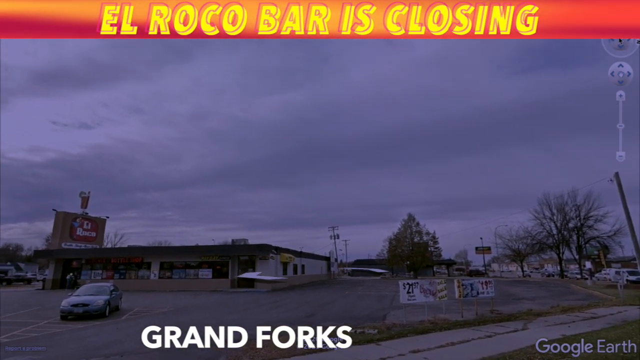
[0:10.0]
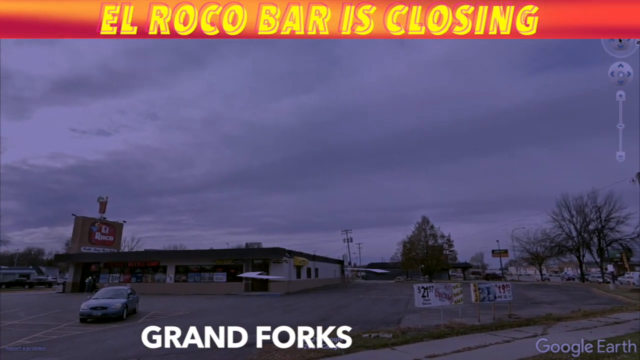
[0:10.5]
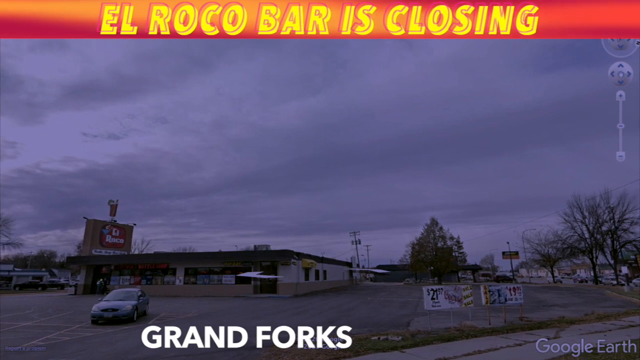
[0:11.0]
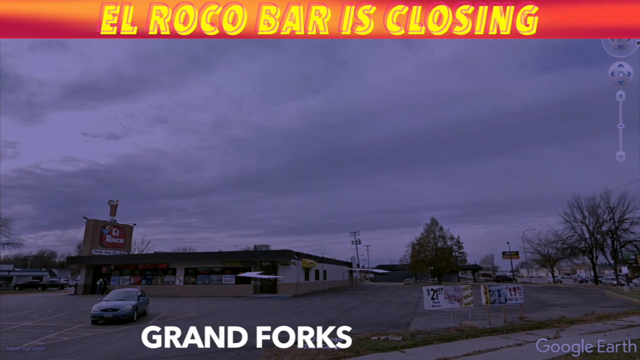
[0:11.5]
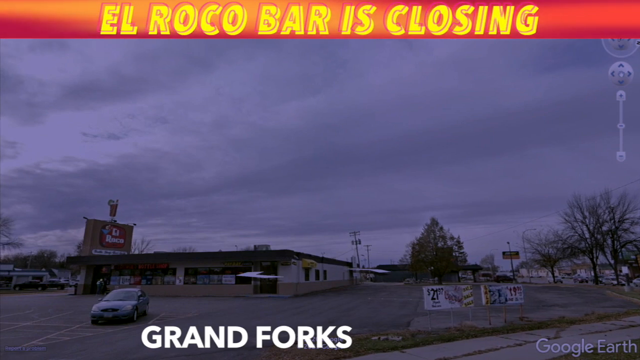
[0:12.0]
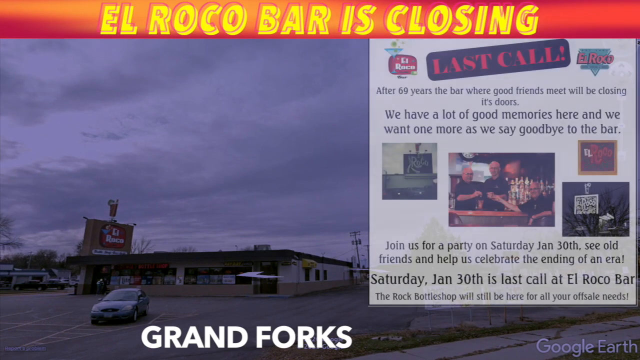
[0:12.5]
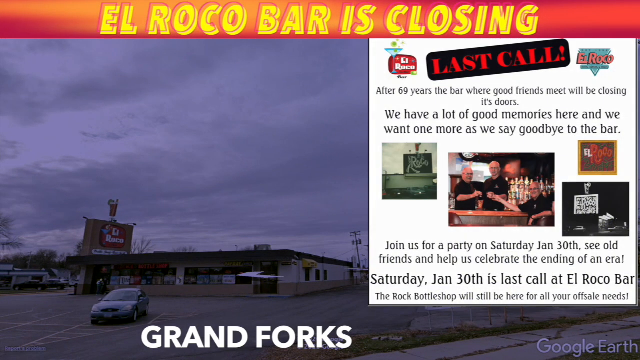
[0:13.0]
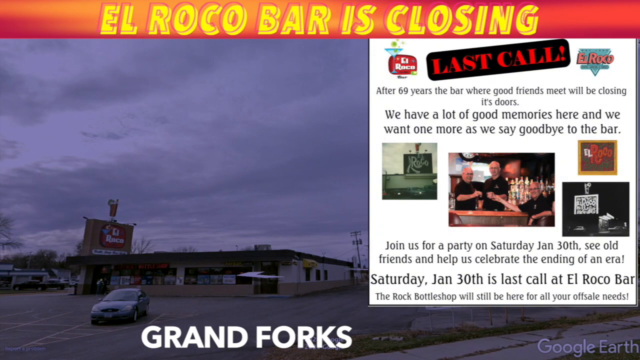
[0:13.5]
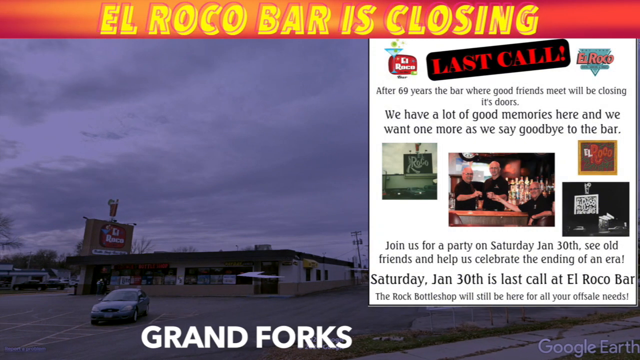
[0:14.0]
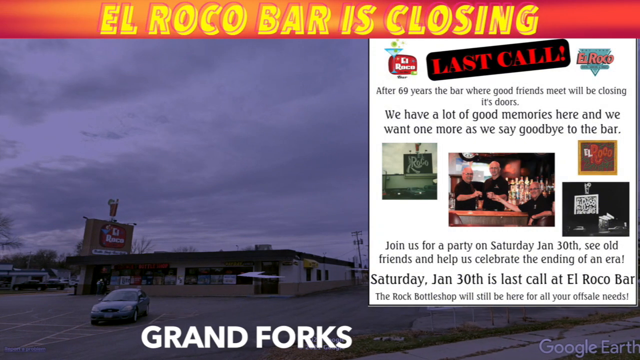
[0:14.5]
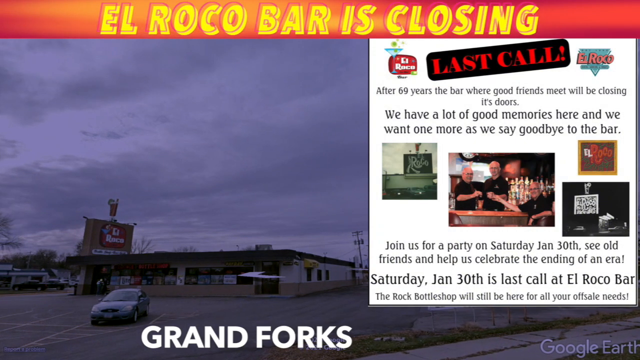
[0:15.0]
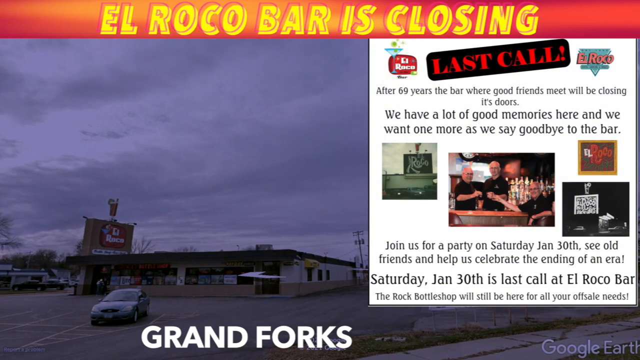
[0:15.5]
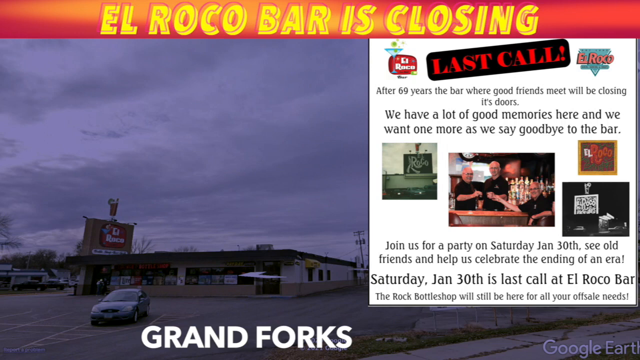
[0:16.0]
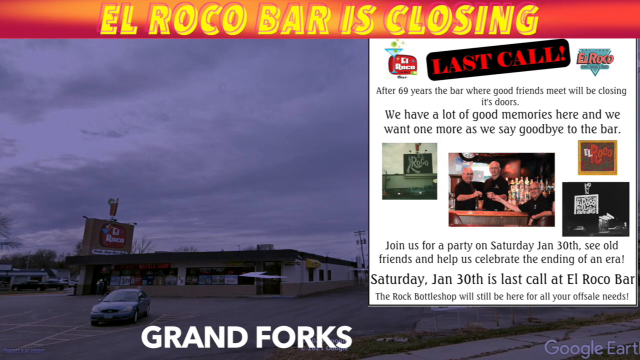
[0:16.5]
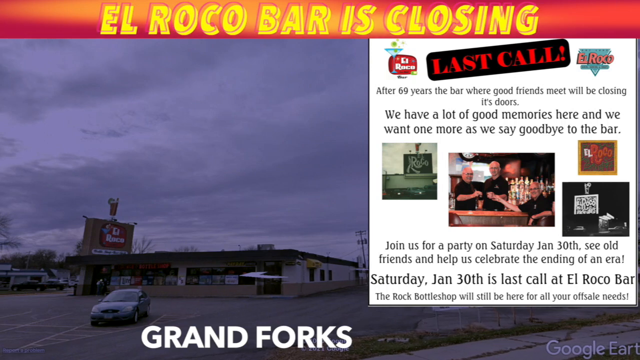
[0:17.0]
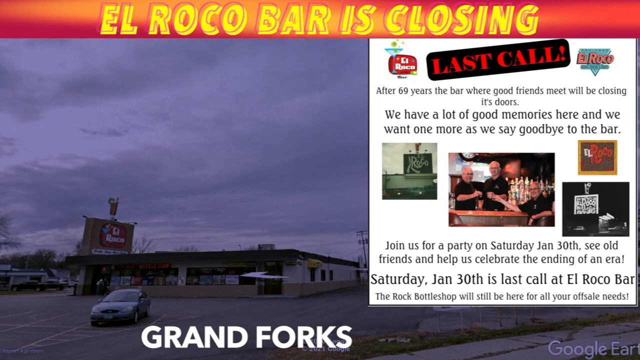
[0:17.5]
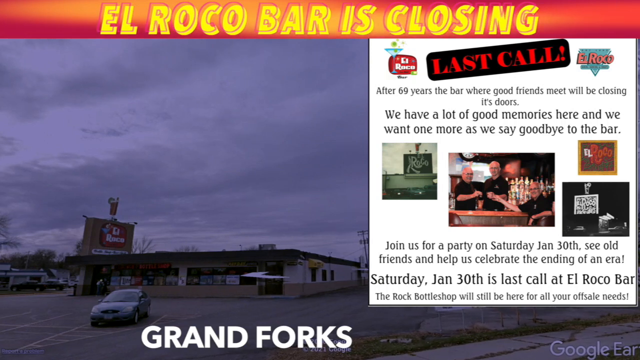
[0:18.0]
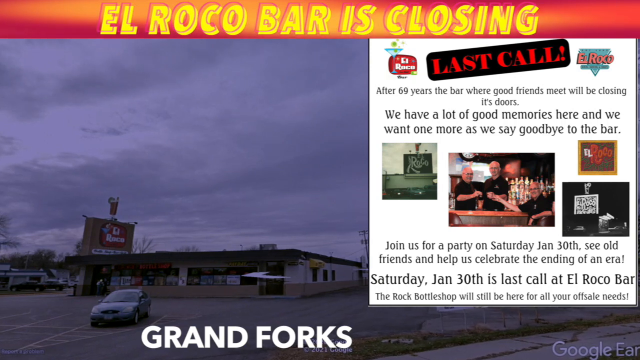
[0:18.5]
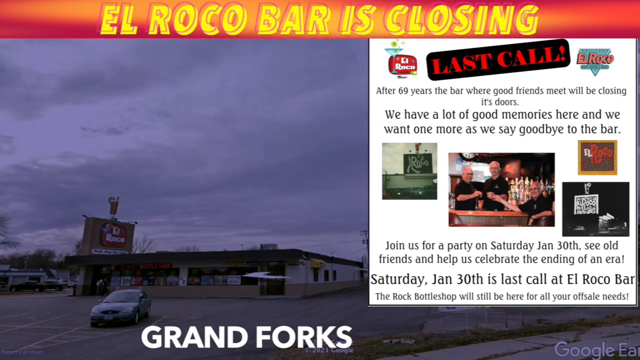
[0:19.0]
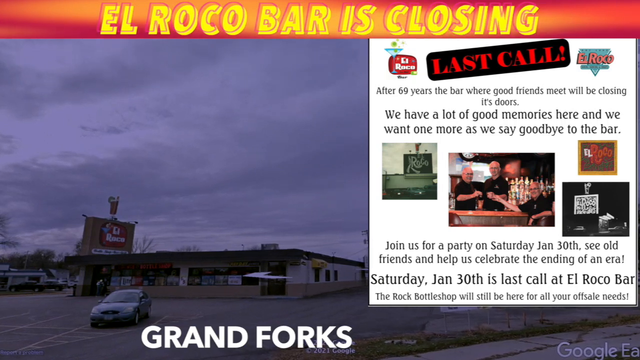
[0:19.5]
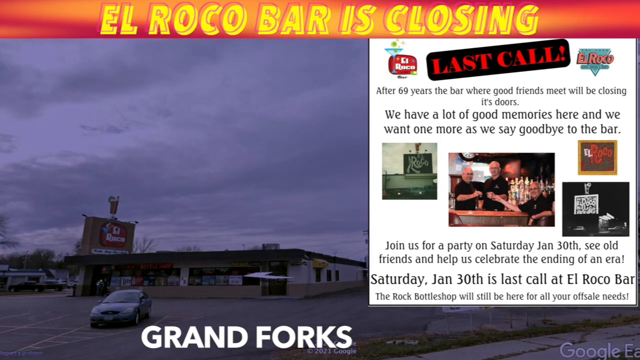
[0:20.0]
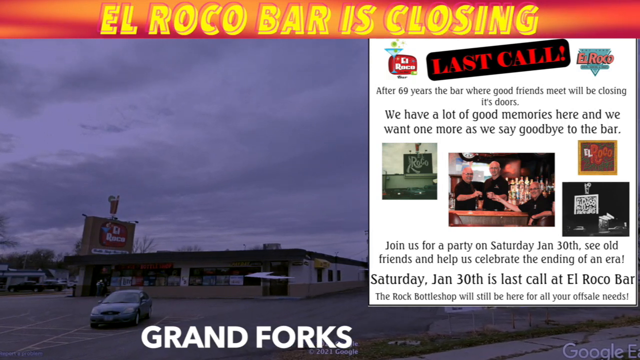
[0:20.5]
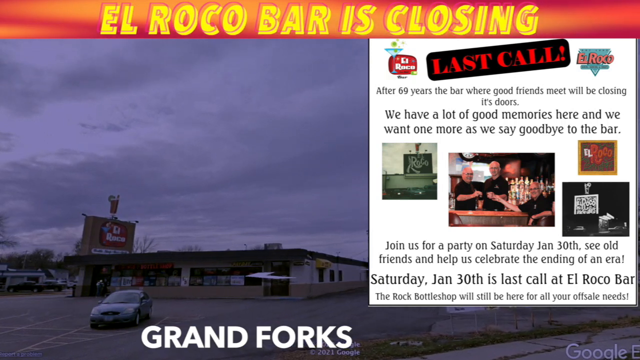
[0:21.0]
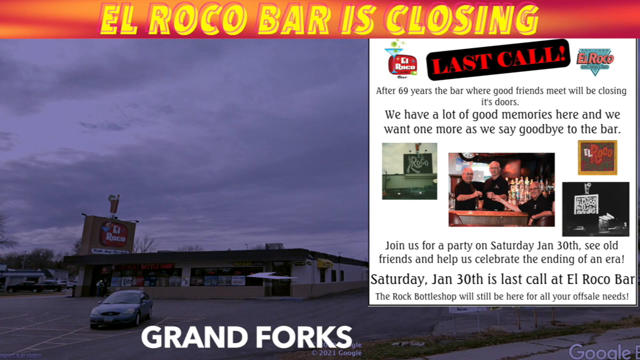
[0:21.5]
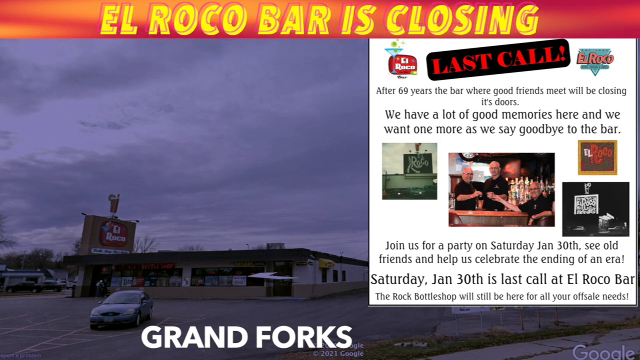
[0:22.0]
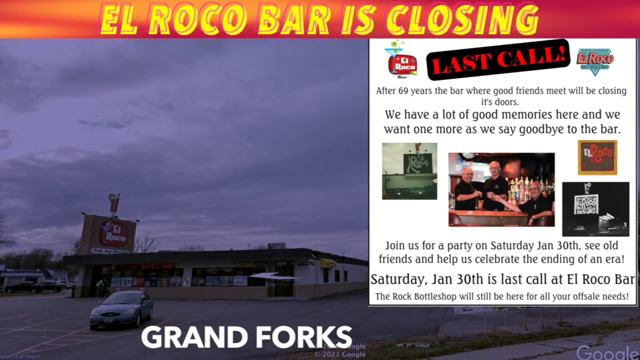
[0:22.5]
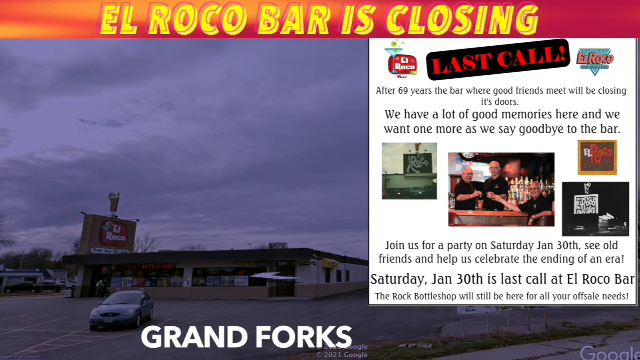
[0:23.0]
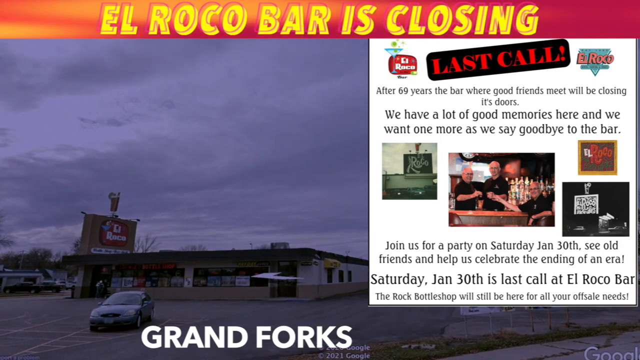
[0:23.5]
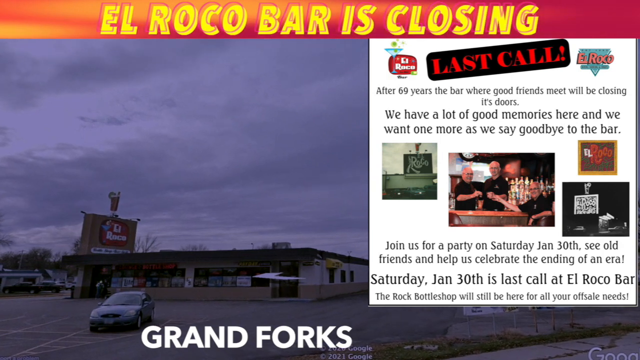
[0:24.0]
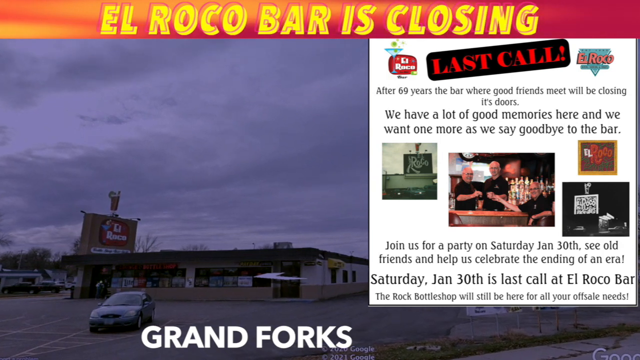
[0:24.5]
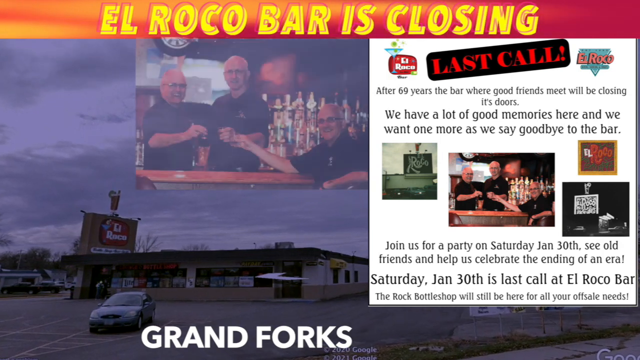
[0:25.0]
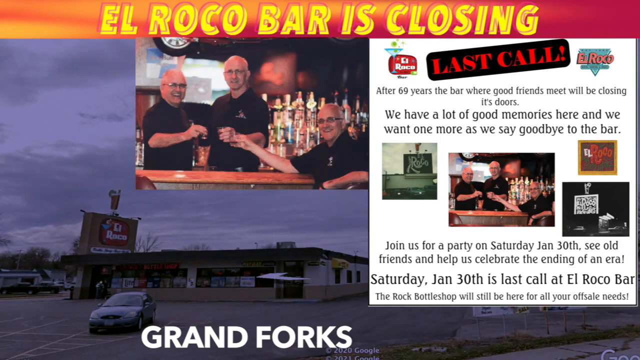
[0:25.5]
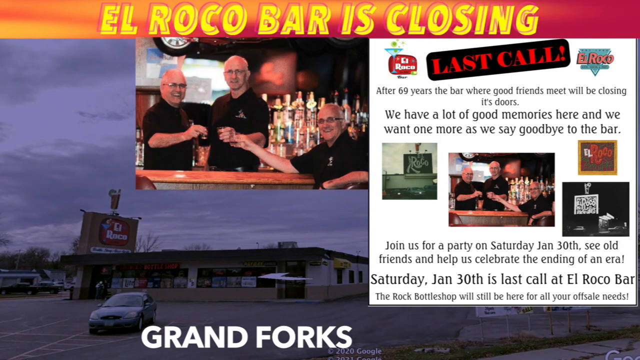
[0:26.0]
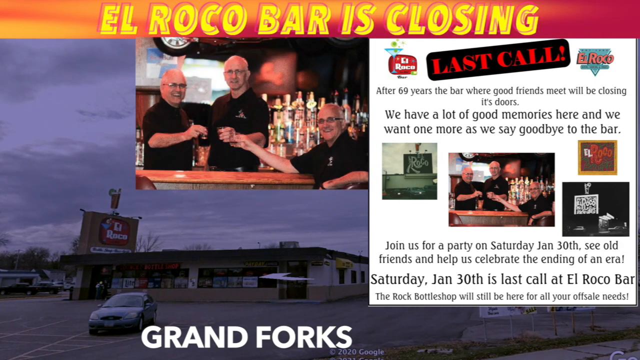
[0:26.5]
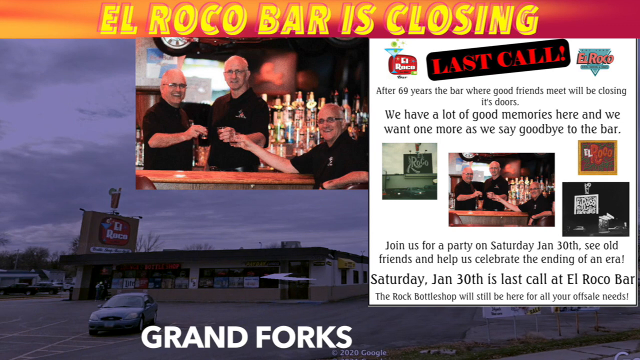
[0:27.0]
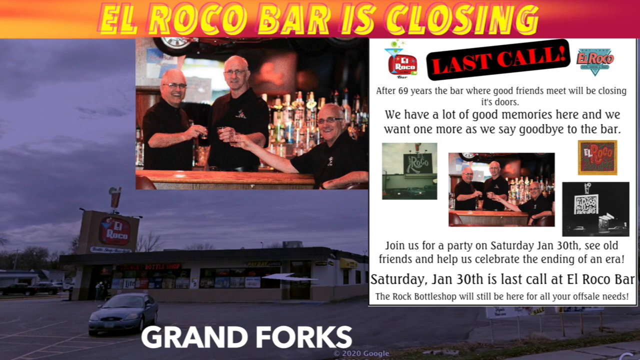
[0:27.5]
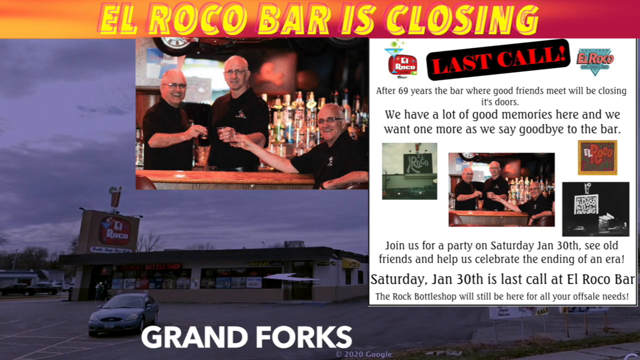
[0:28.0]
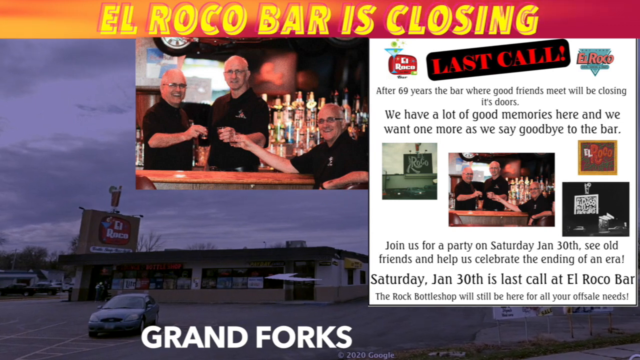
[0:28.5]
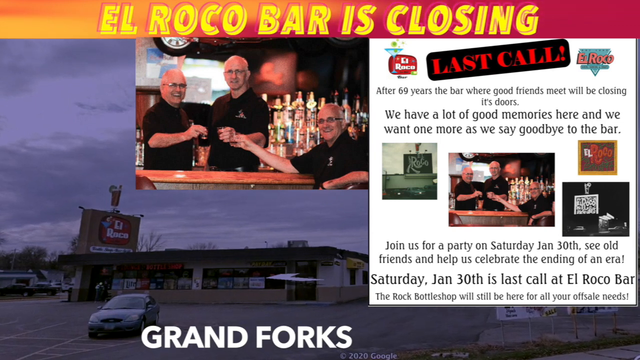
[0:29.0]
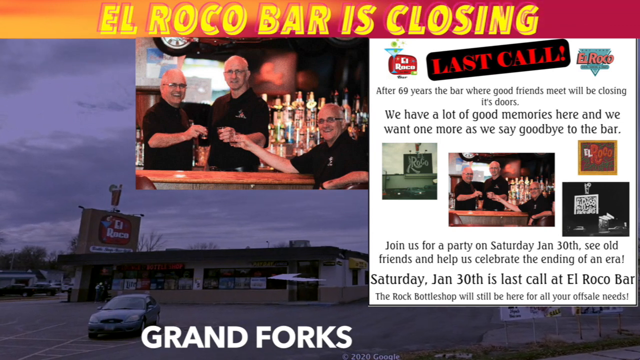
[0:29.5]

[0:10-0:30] Text reads "El Rocco bar is closing," and the location is Grand Forks. A Google Earth map view of the place, apparently the bar, is scrolled around. A flyer reads "last call after 69 years. The bar where good friends meet will be closing its doors. We have a lot of good memories here and we want one more as we say goodbye to the bar." Some pictures appear, and the flyer continues: "join us for a party on Saturday January 30th" and "Saturday January 30th is last call at El Rocco bar. The rock bottle shop will still be here for all your off-sell needs." One picture shows three guys, who may be owners.